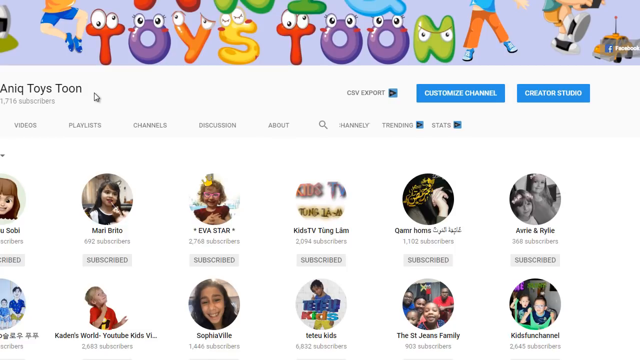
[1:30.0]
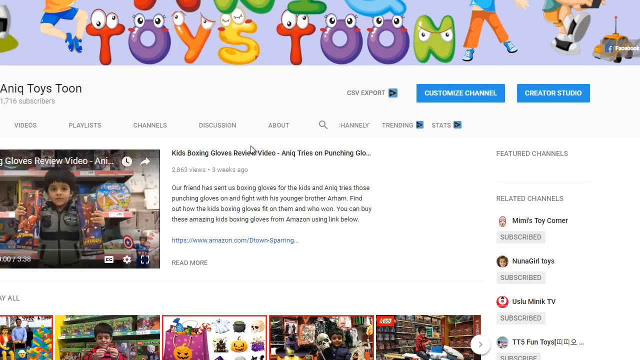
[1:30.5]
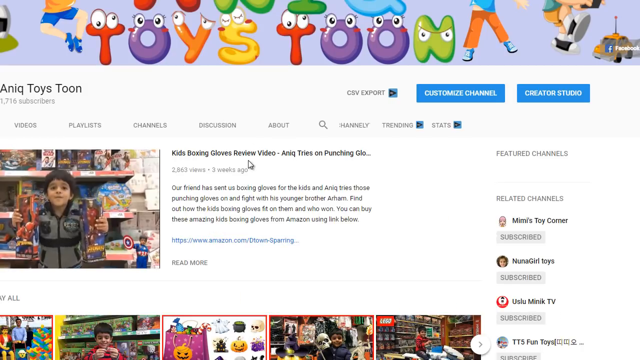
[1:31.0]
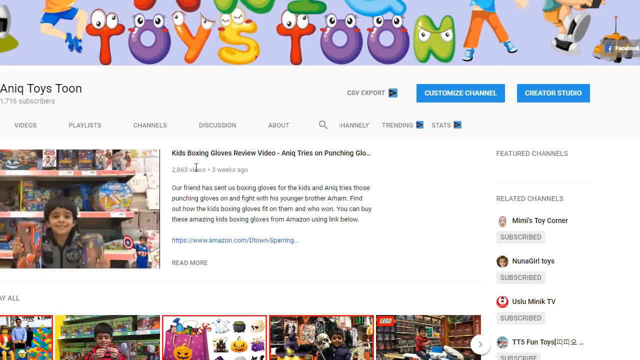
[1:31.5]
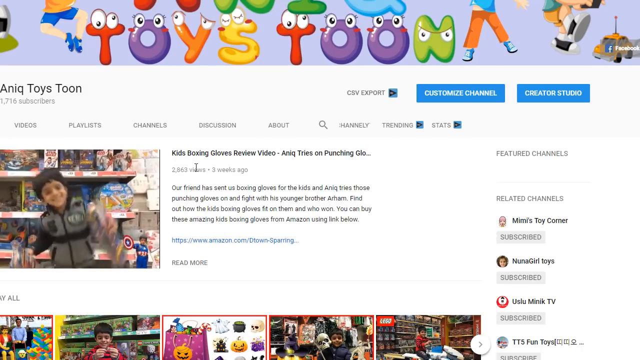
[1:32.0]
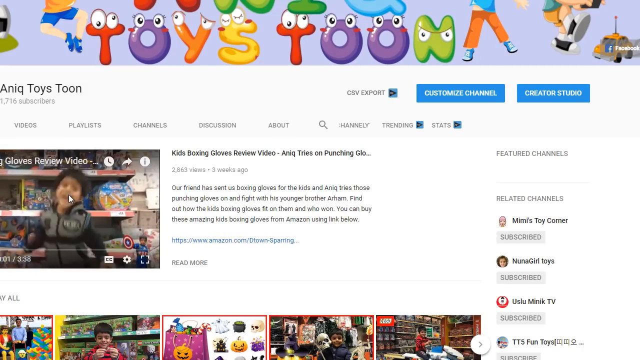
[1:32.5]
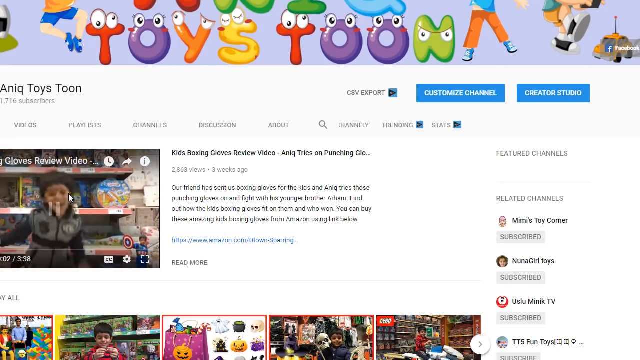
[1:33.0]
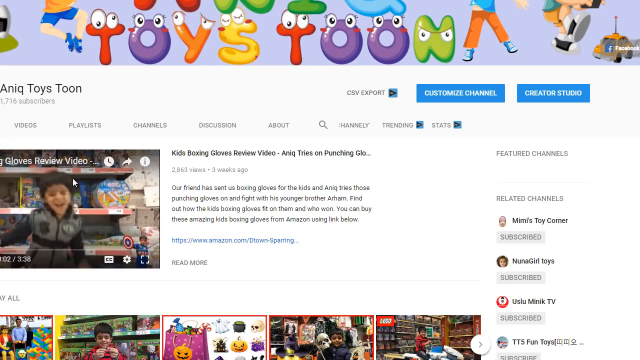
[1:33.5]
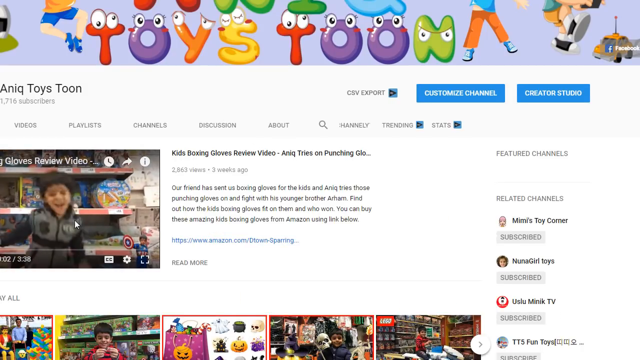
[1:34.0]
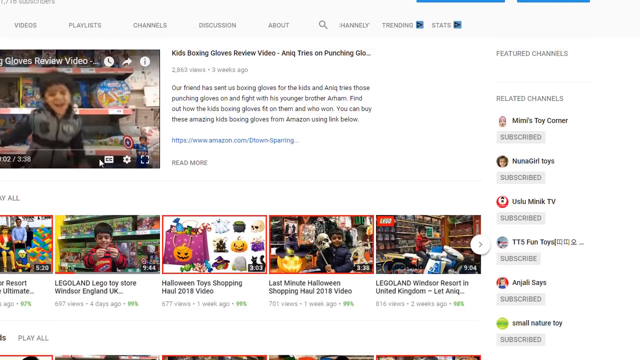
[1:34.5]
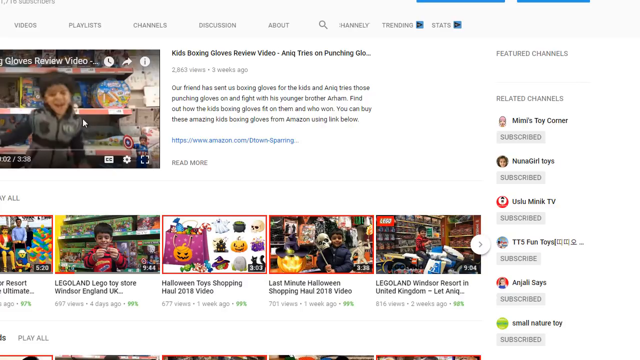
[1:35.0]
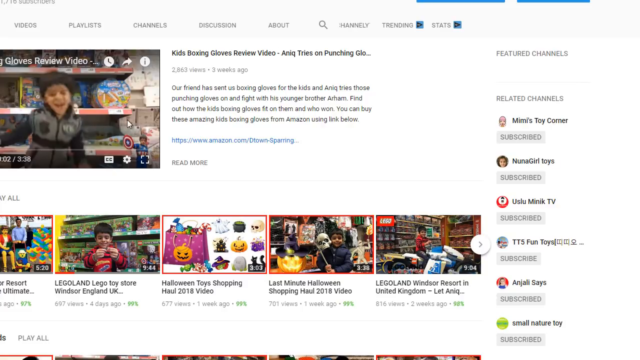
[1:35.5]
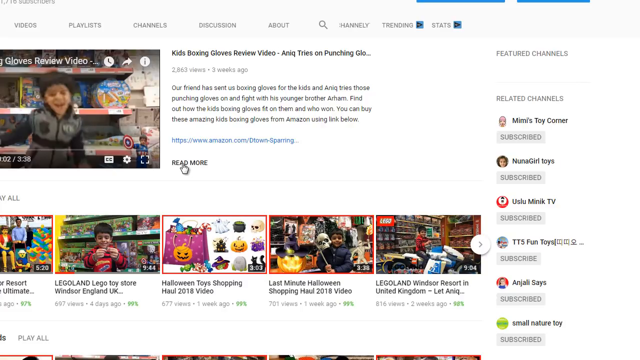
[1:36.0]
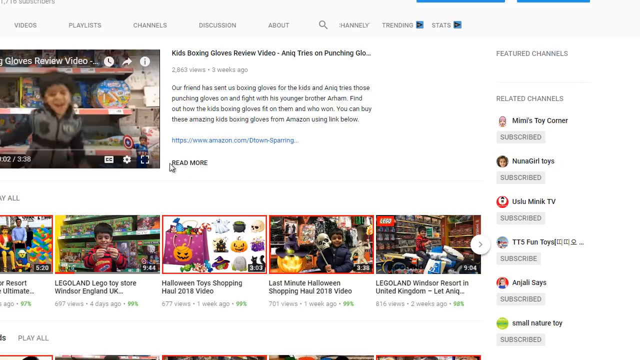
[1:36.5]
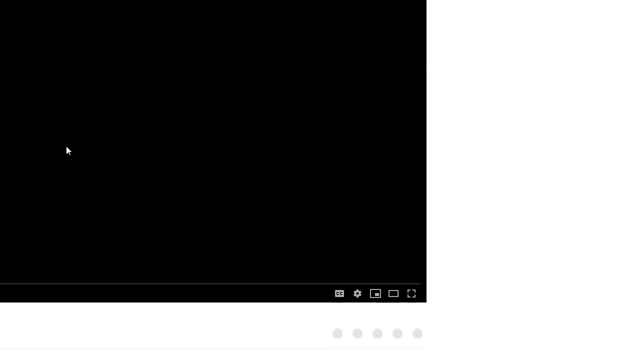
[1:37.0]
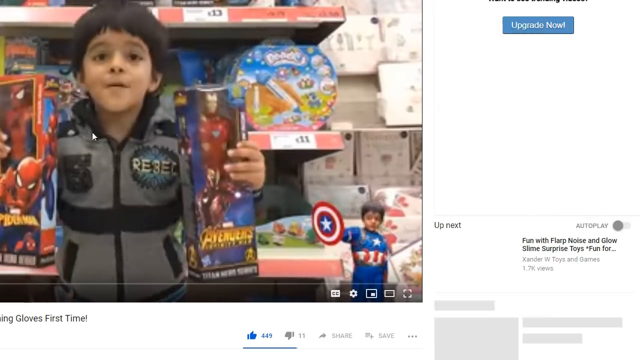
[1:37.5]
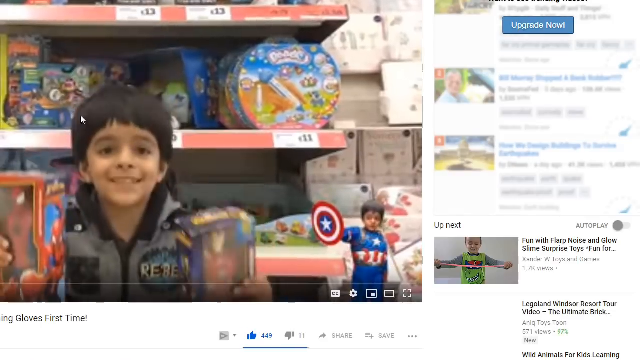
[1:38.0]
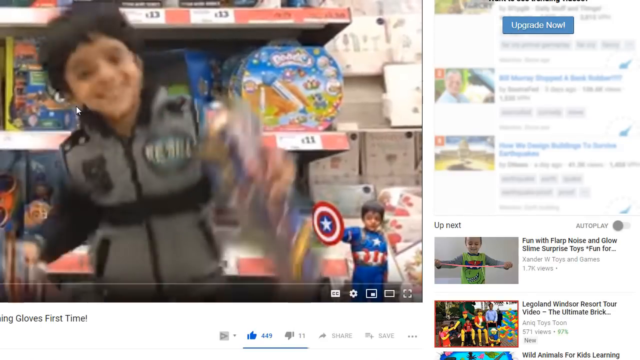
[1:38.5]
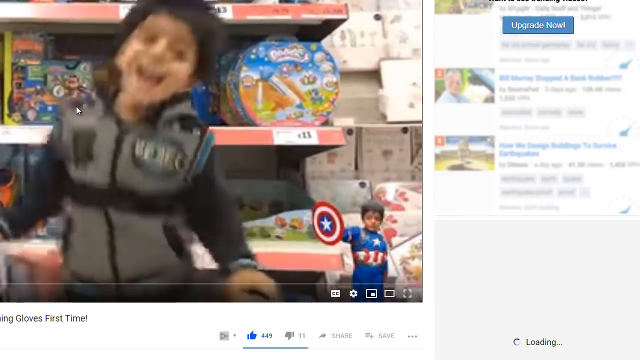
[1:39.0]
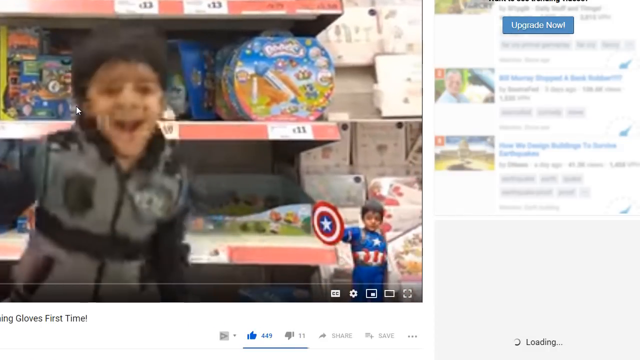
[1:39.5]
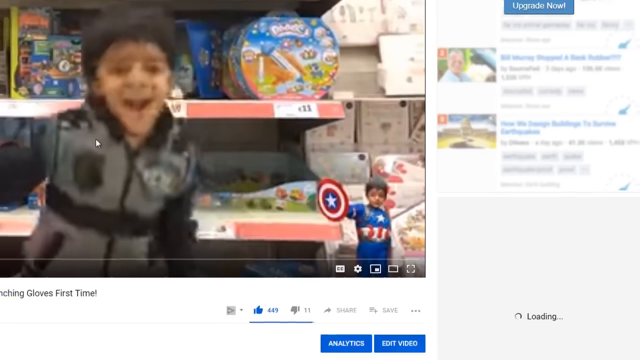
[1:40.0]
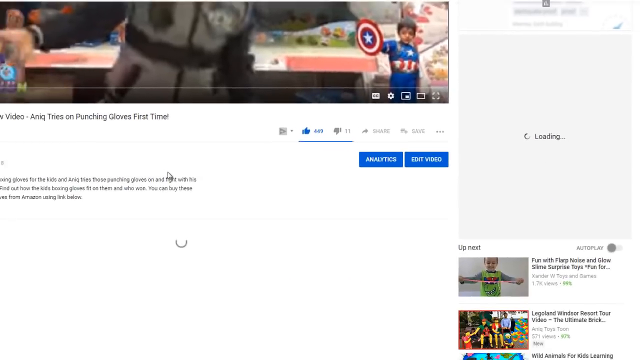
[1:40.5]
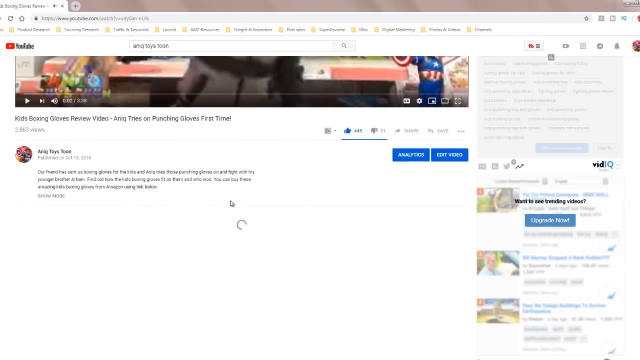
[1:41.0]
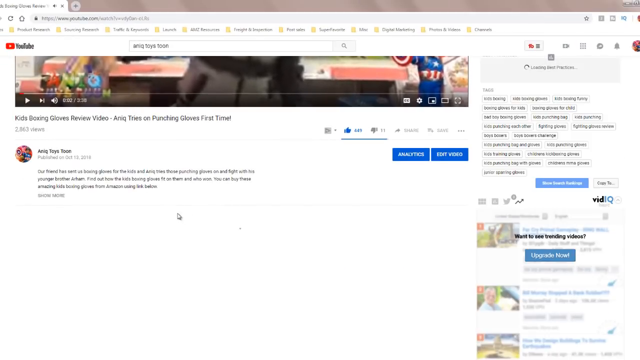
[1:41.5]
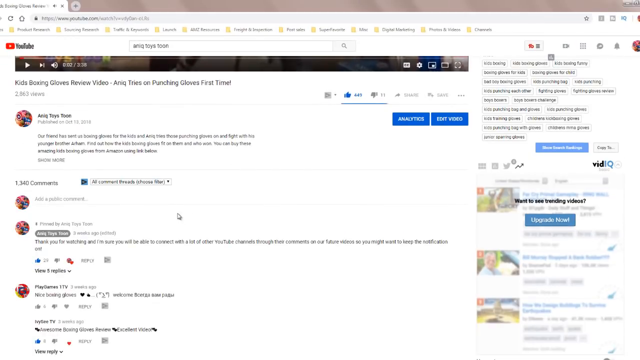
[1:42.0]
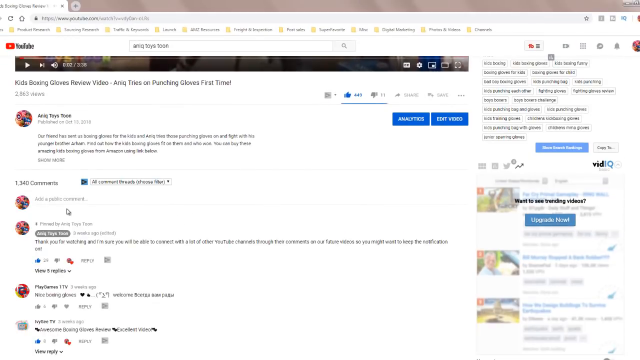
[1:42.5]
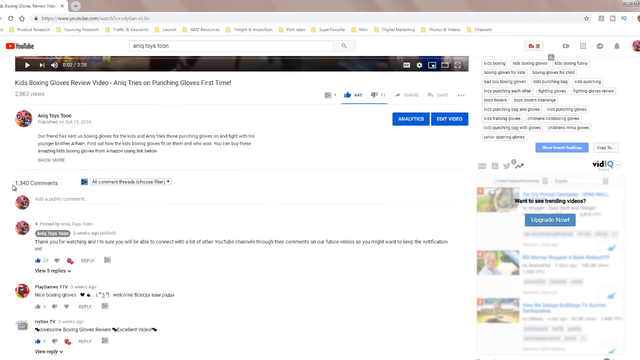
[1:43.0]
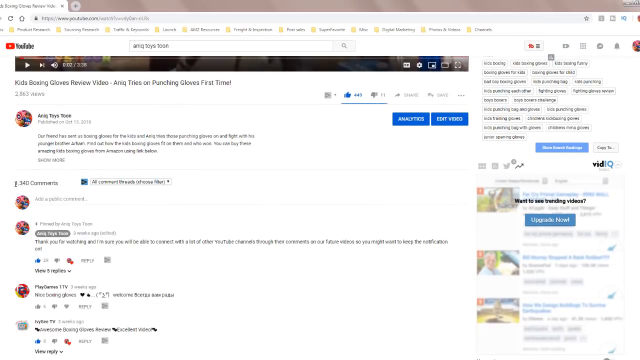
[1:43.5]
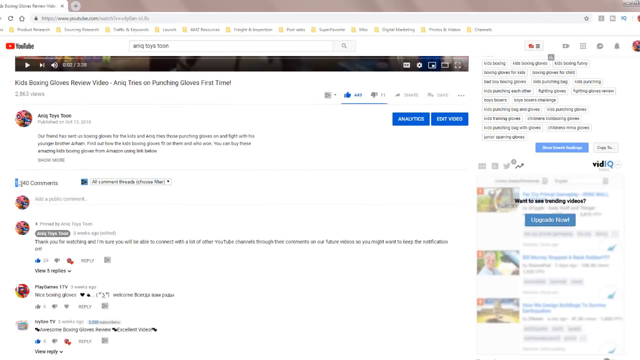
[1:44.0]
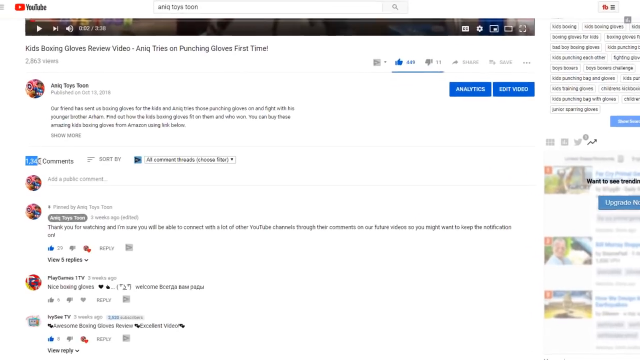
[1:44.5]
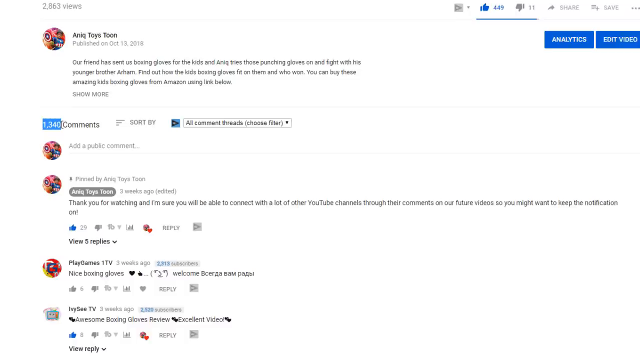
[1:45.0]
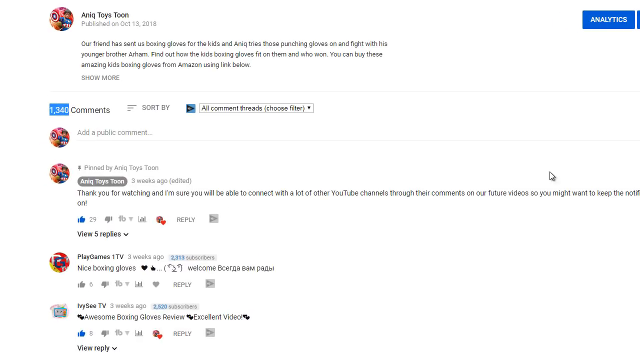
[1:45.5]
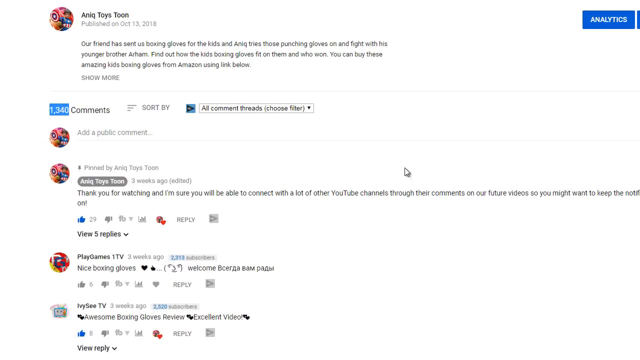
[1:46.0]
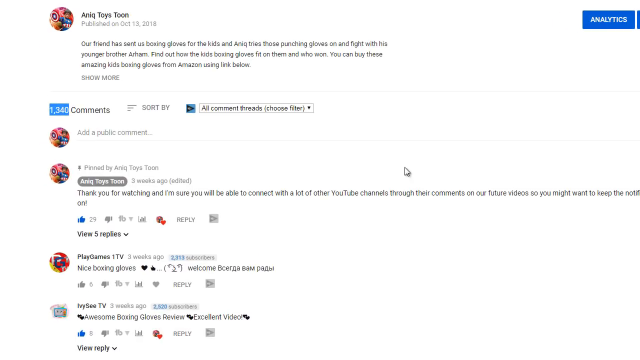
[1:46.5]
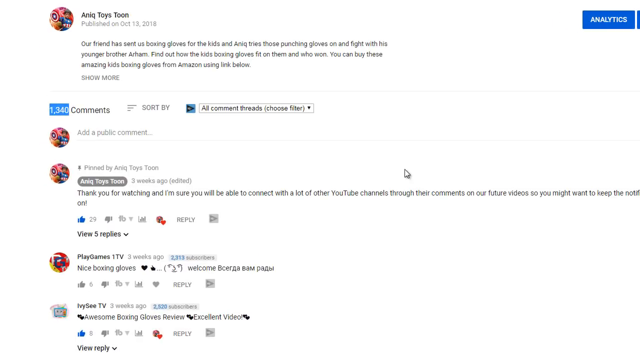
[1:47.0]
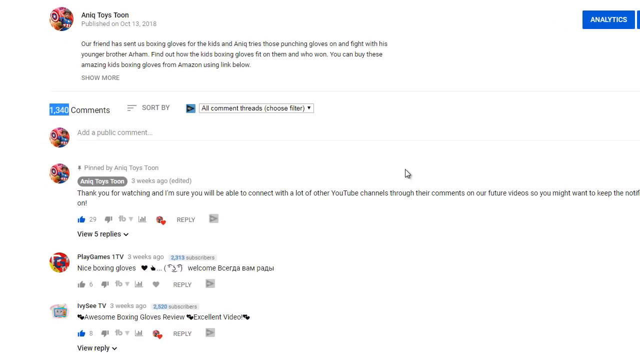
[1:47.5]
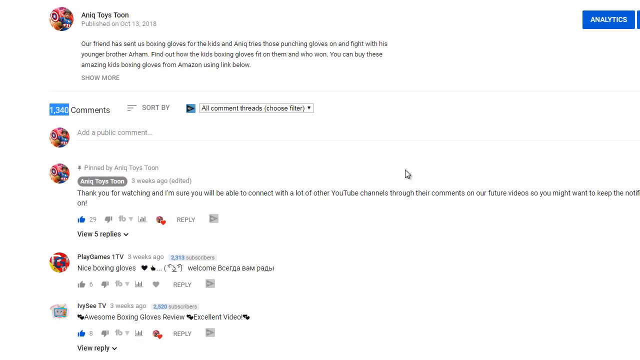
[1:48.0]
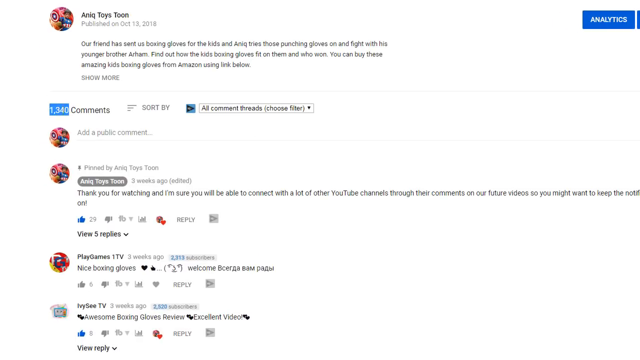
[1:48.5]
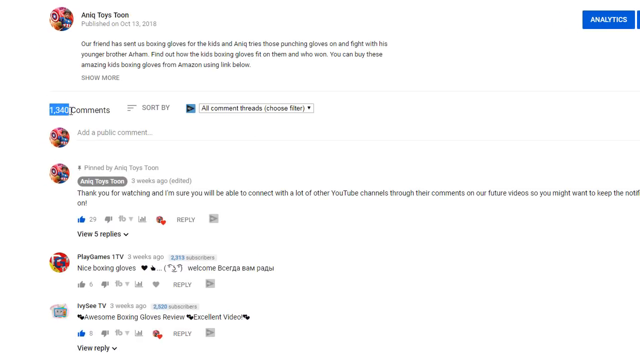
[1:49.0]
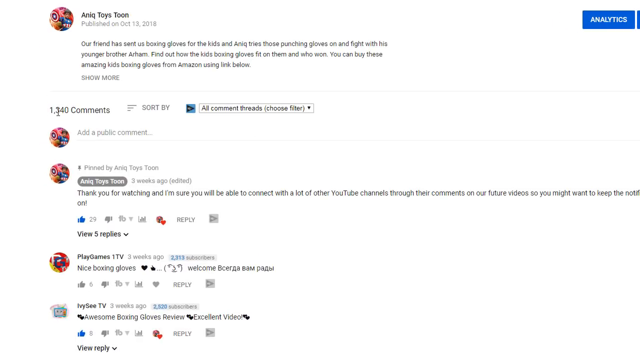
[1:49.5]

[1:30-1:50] The website seems to be for kids or to entertain kids; its name is Anik Toys. Its header is very colorful, with yellow, green, blue and many more colors, and there are cartoon characters of girls and boys. Options on the screen include videos, playlists, channels, discussions, about, trending, stats, customize channel and create studio. The person clicks on videos and videos pop up on the screen. The first video playing shows a little boy jumping up and down very excitedly. The person scrolls down to show more videos, then zooms in on that same video of the little boy and highlights how many comments it has: 1340.